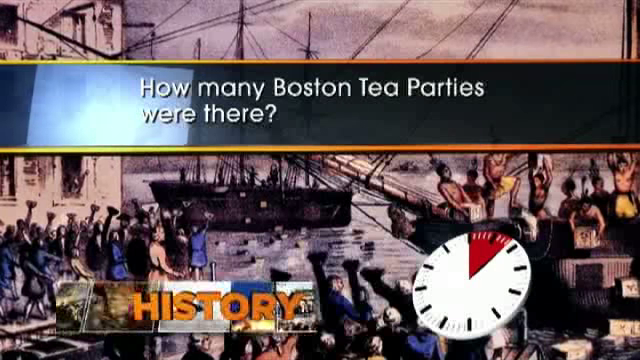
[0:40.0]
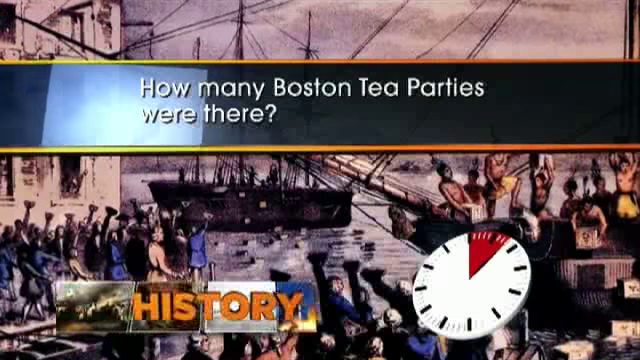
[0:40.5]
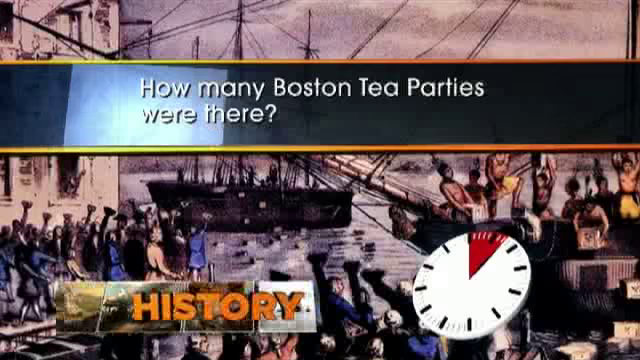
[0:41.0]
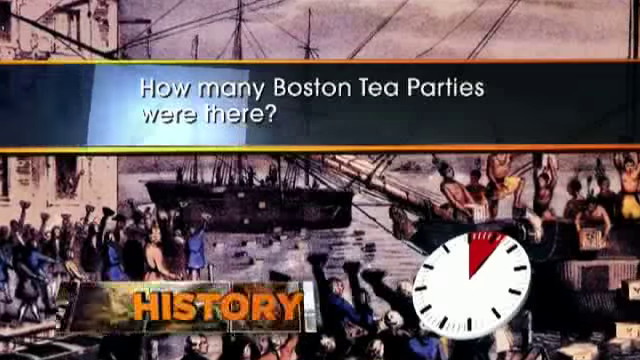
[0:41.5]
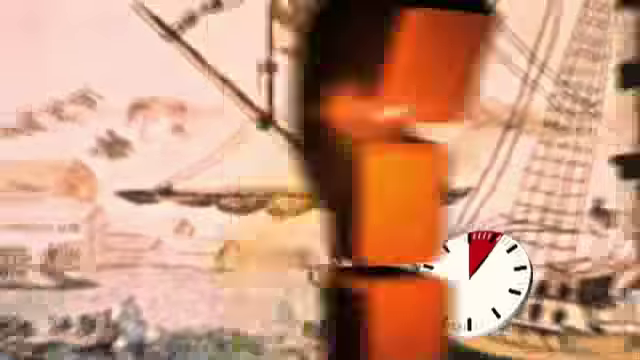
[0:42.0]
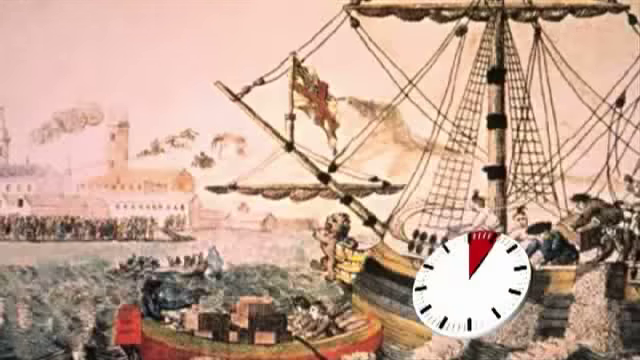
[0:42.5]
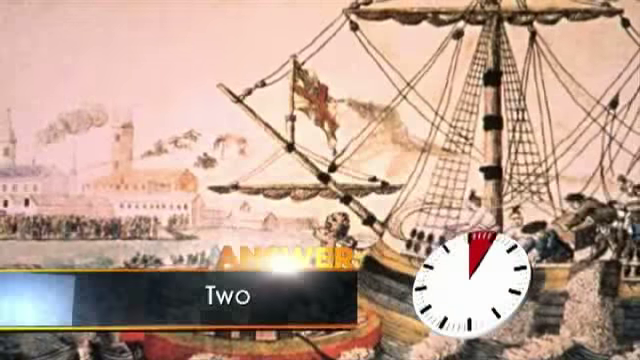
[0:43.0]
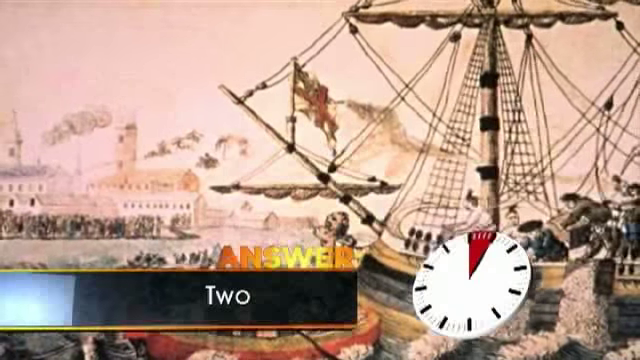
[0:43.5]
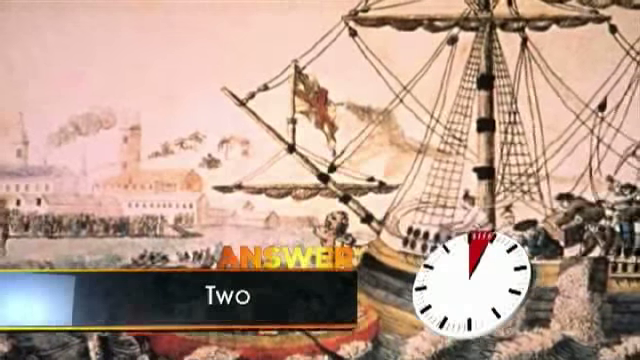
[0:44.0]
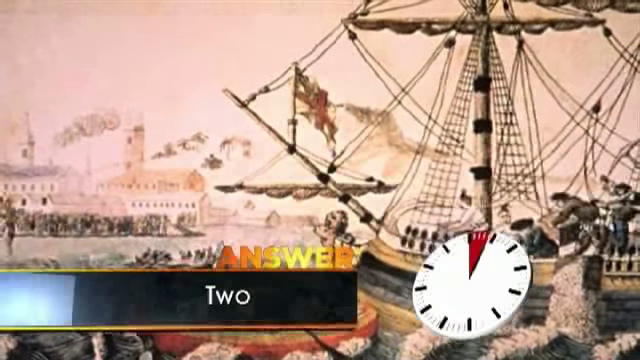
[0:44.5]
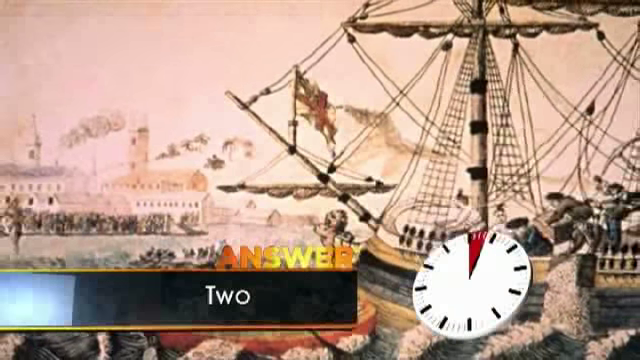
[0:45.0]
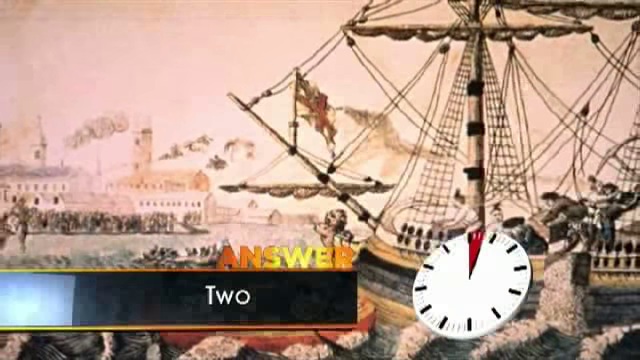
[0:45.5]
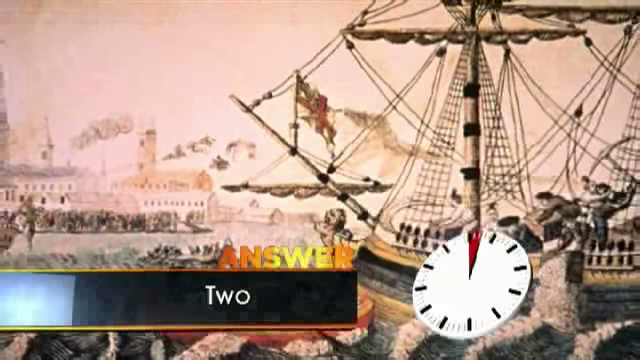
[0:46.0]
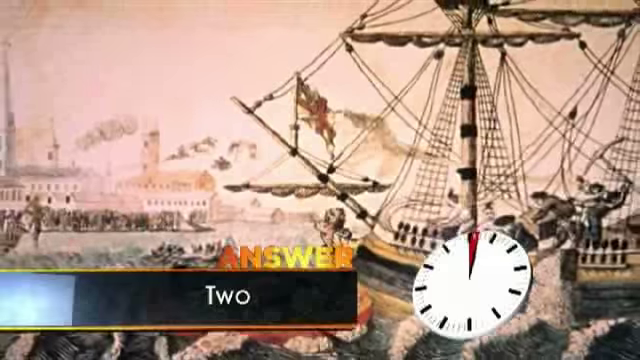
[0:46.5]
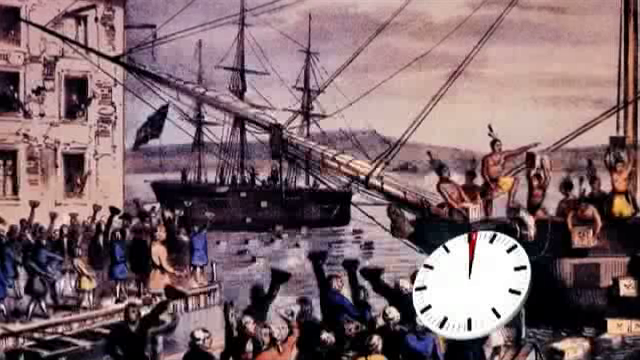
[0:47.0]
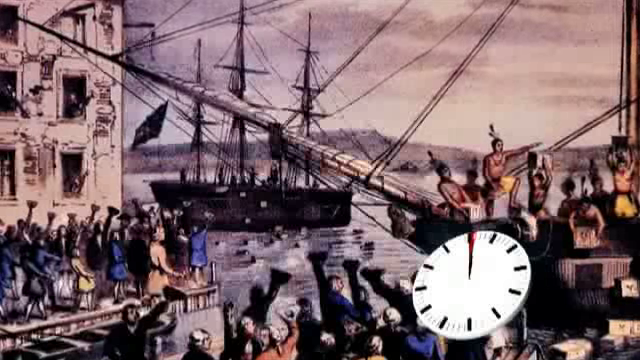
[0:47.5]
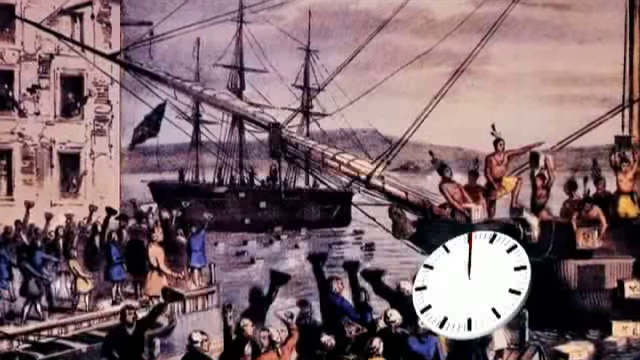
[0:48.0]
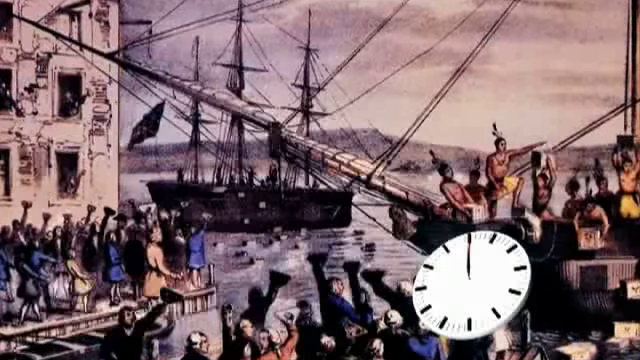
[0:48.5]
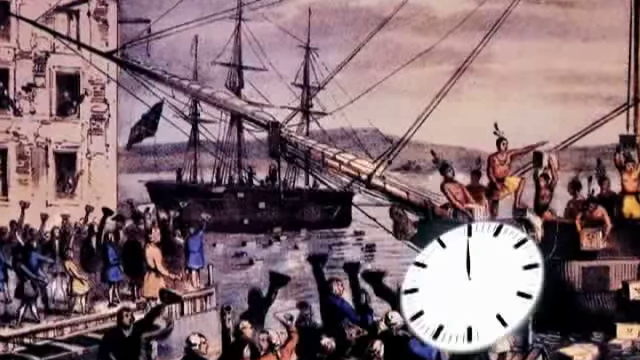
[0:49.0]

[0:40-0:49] The video, a little wider than it is tall, starts with an artist's rendition, possibly done in colored pencils, of a ship on the right-hand side. Several people are on it who look to be from the 1900s; they have black triangular hats and long coats, some blue and some brown. The ship seems to be coming in toward the shore on the left-hand side, which is lined with people, with a couple of buildings in the background. At the bottom, the word "answer" appears in orange, with "two" below it. The image slowly zooms out, then switches to a similarly styled artist's rendition of a different scene: what looks like a bunch of Indians on a ship on the right, a bunch of people on the docks on the left-hand side, a ship in the background kind of between the two, and a big tall building on the left. A horizontal banner pops in at the top with a question in white reading "how many Boston Tea Parties were there?" At the bottom it then says "answer, two."